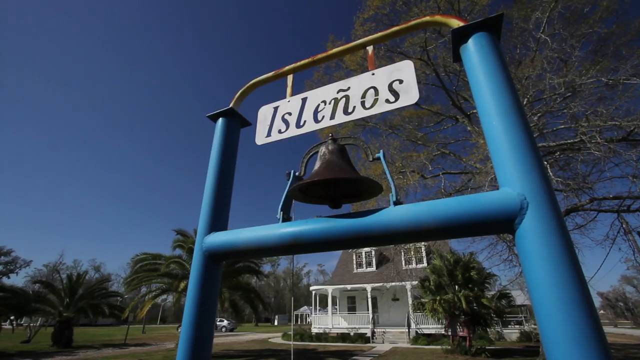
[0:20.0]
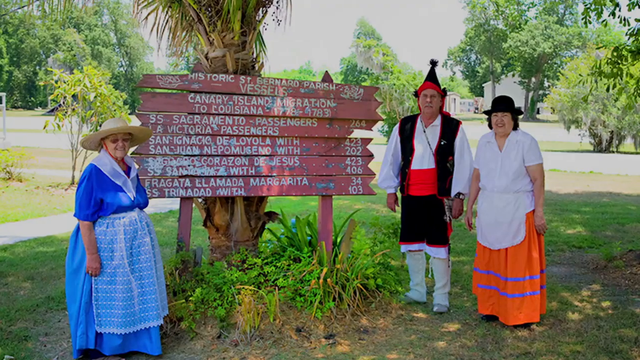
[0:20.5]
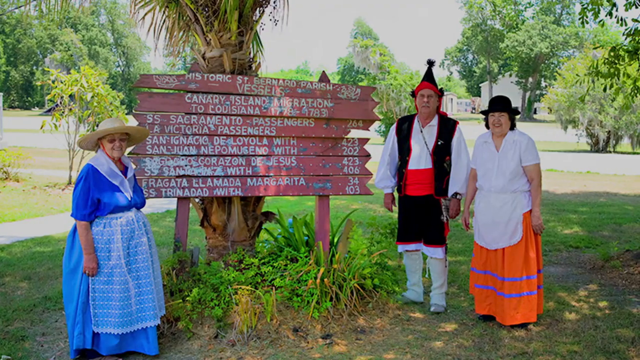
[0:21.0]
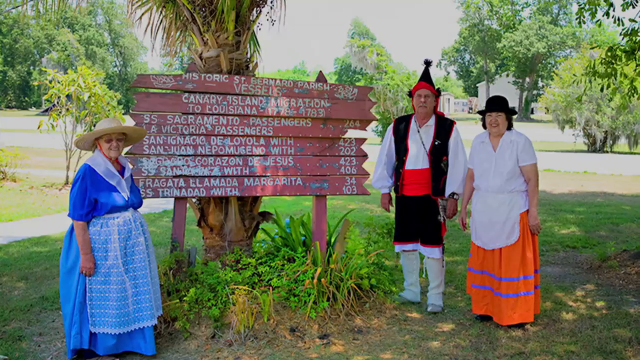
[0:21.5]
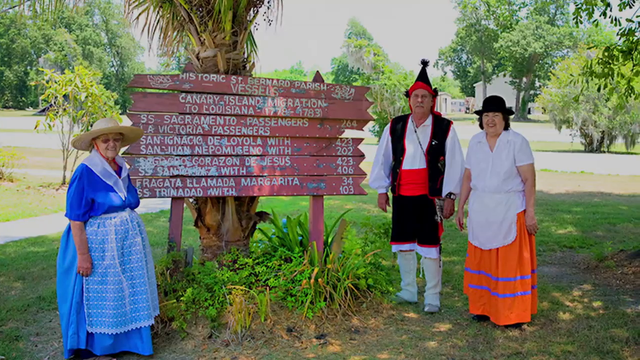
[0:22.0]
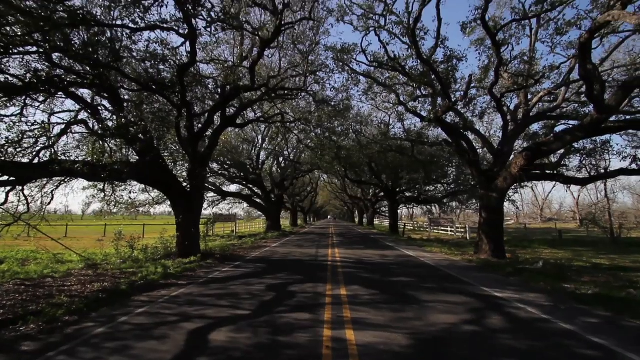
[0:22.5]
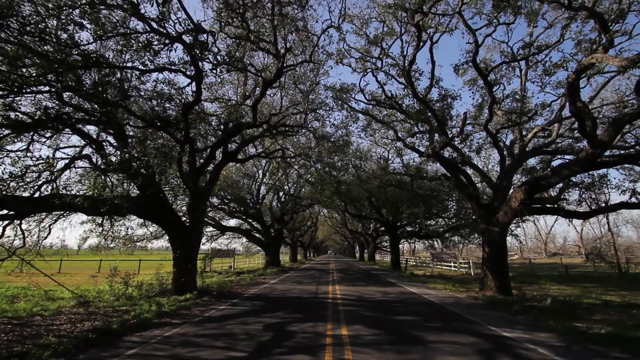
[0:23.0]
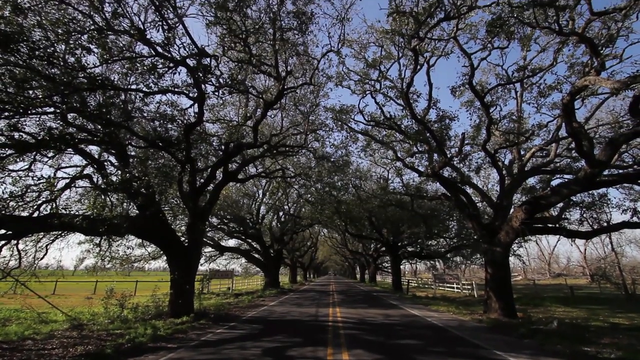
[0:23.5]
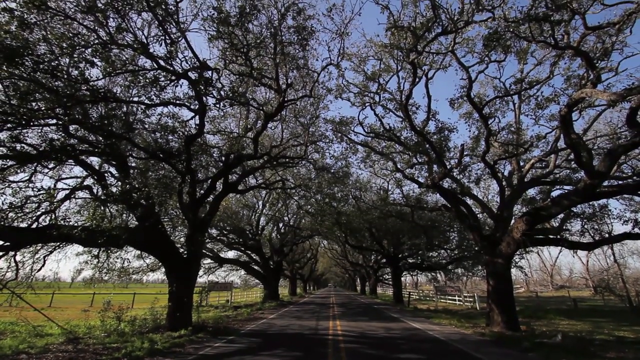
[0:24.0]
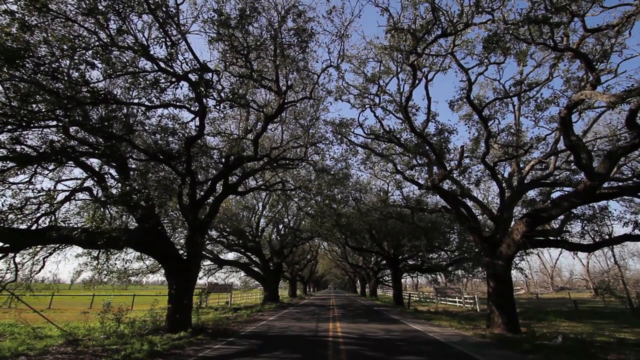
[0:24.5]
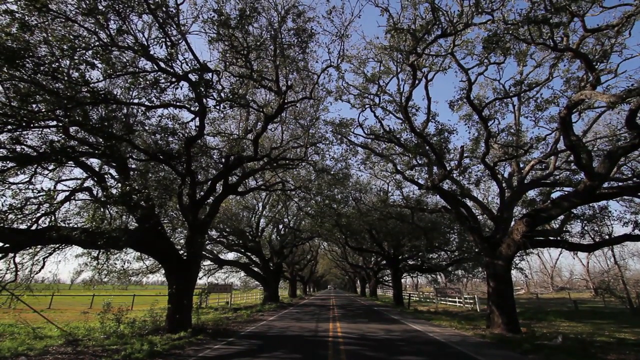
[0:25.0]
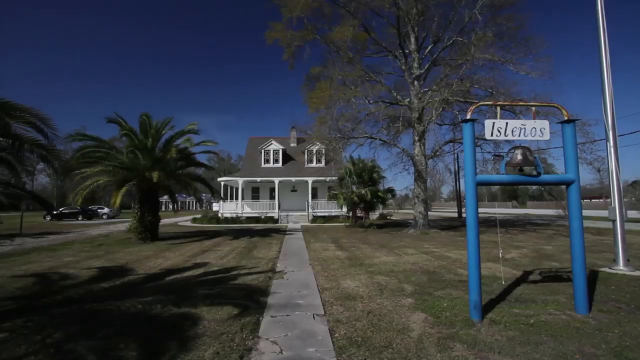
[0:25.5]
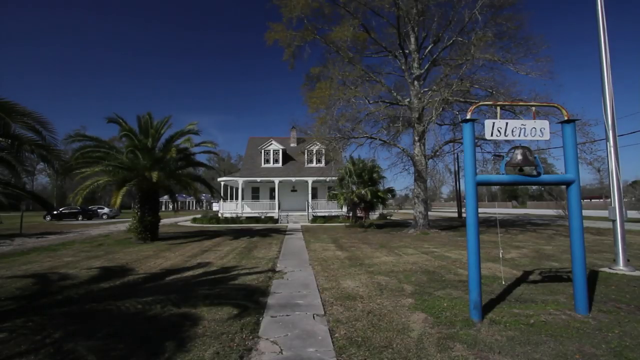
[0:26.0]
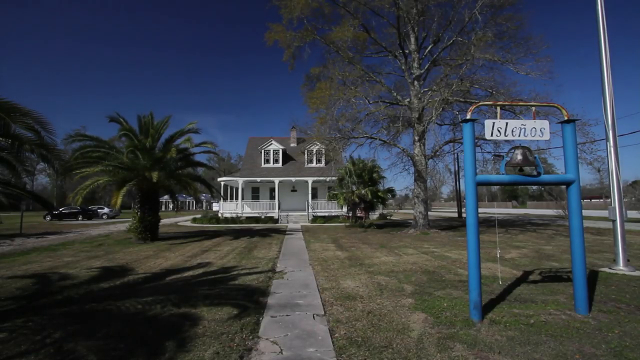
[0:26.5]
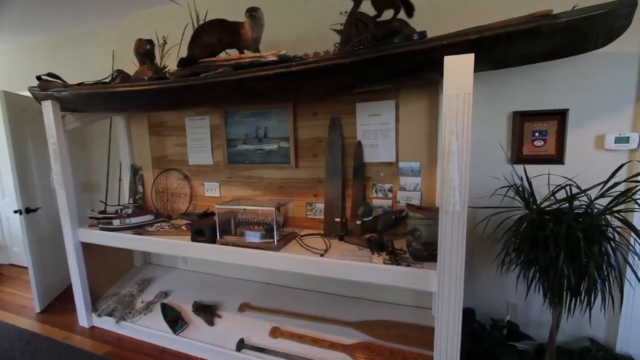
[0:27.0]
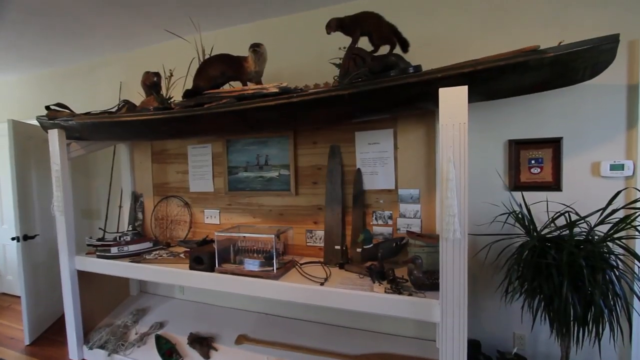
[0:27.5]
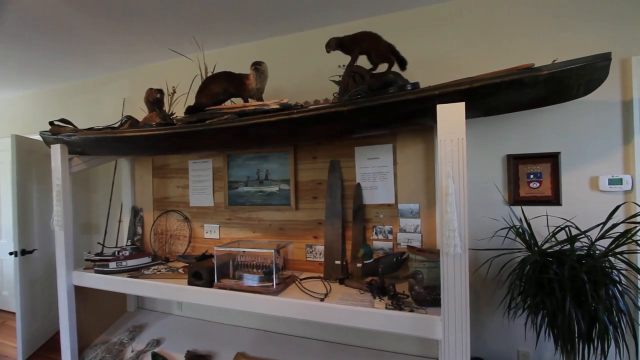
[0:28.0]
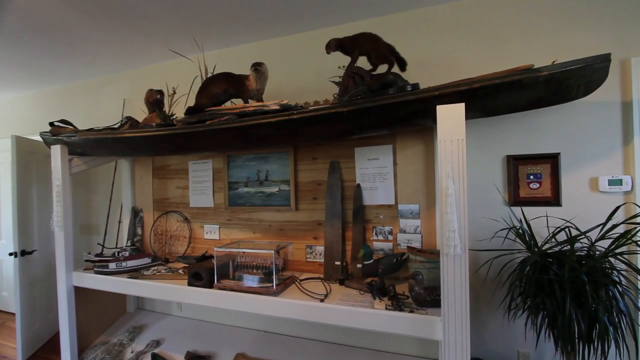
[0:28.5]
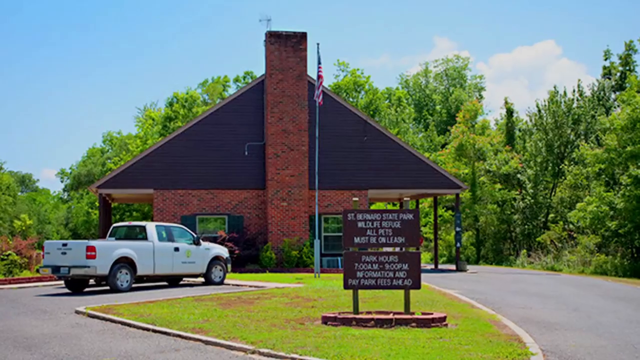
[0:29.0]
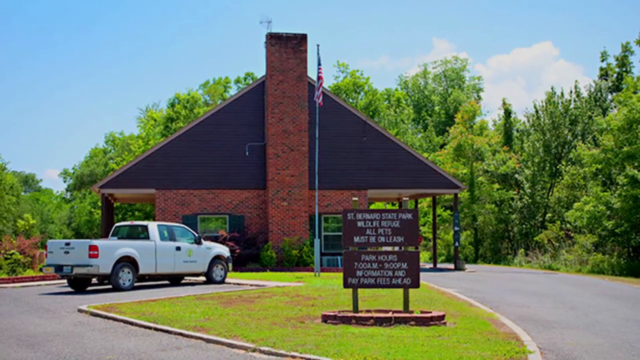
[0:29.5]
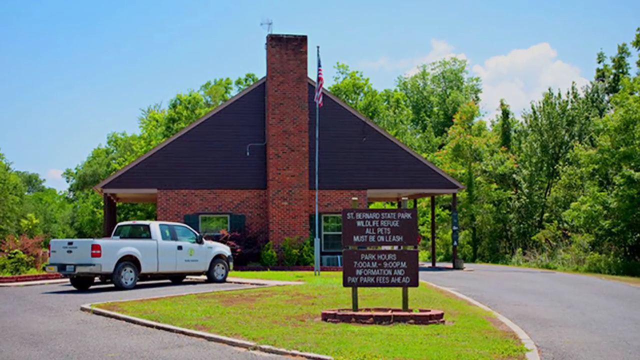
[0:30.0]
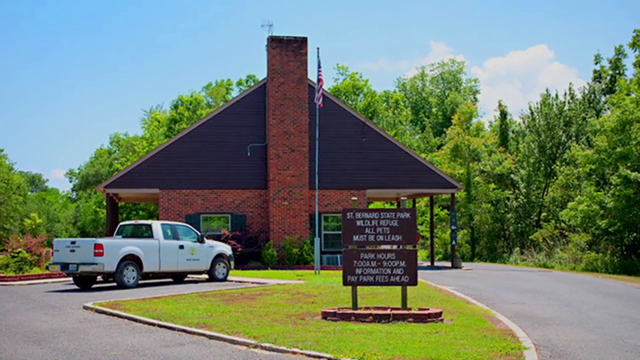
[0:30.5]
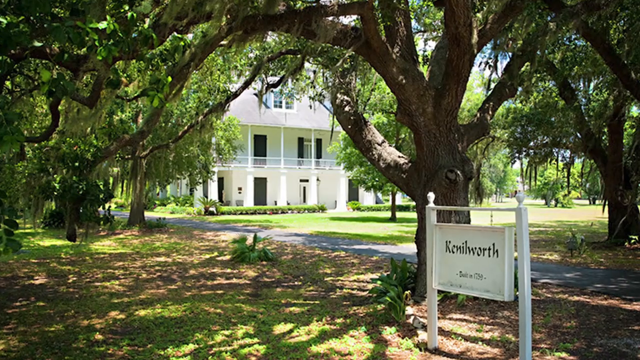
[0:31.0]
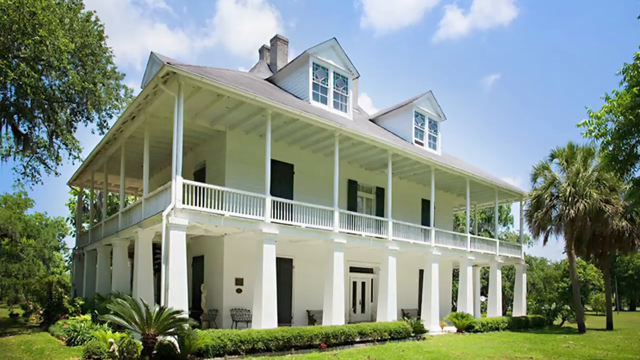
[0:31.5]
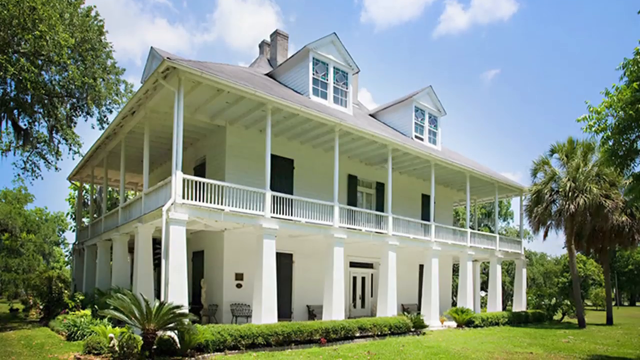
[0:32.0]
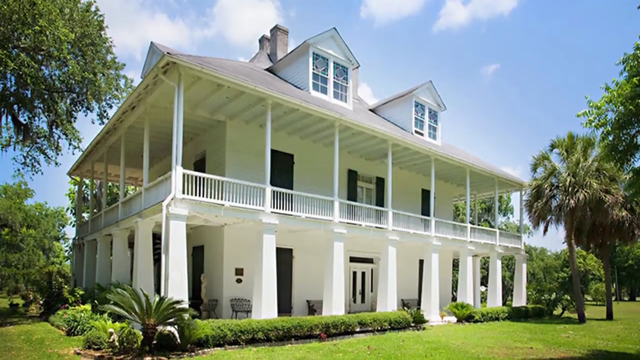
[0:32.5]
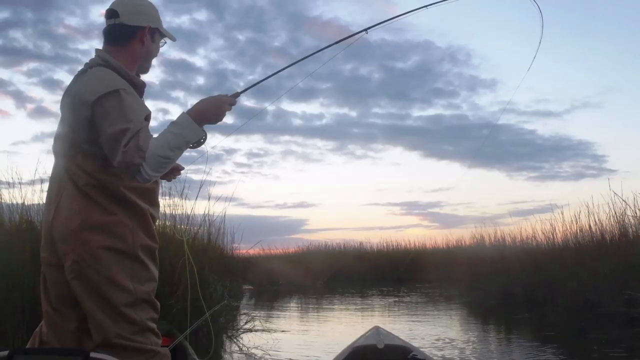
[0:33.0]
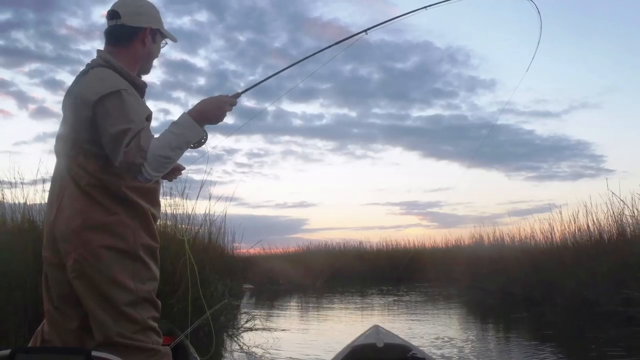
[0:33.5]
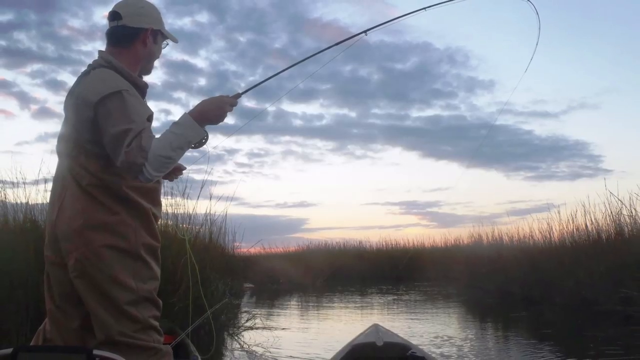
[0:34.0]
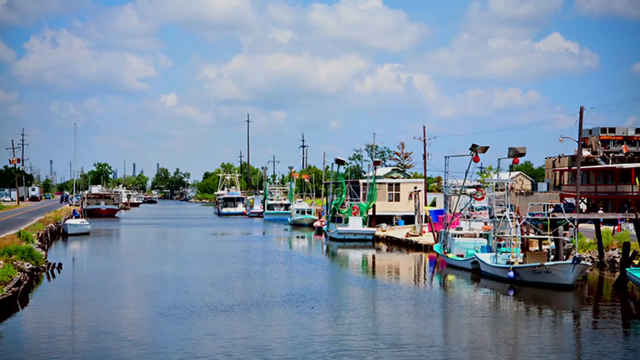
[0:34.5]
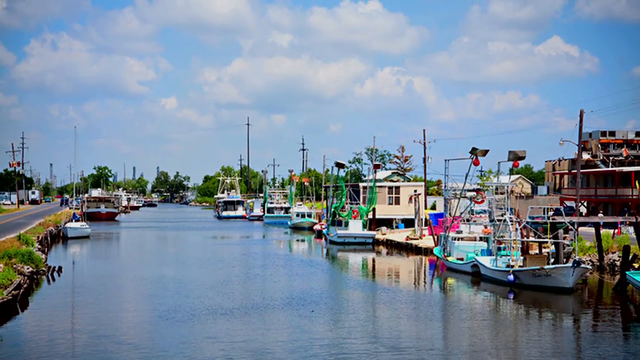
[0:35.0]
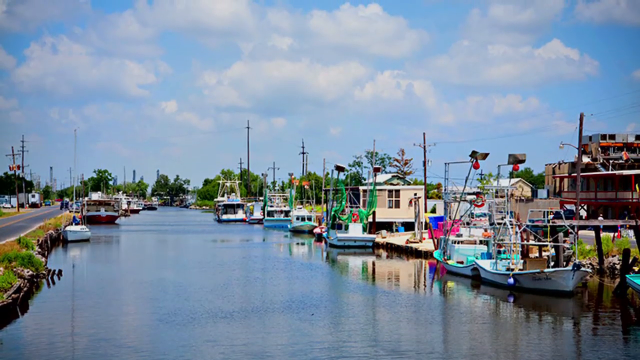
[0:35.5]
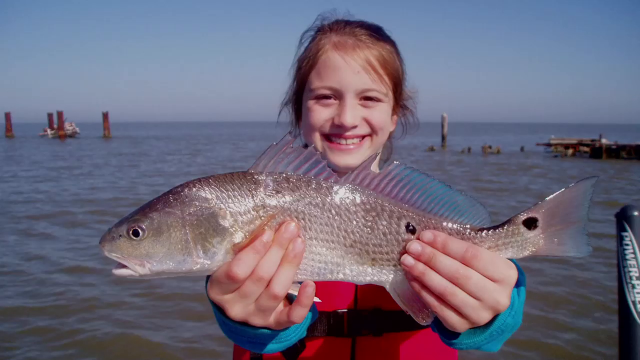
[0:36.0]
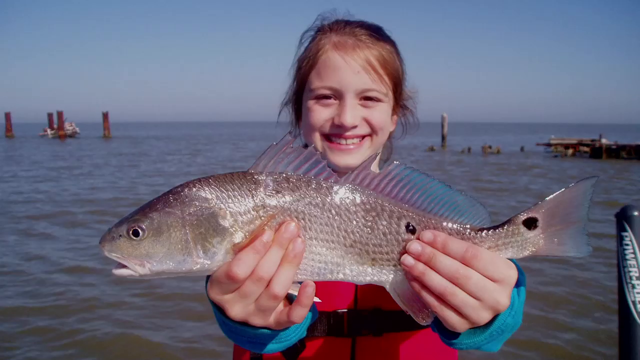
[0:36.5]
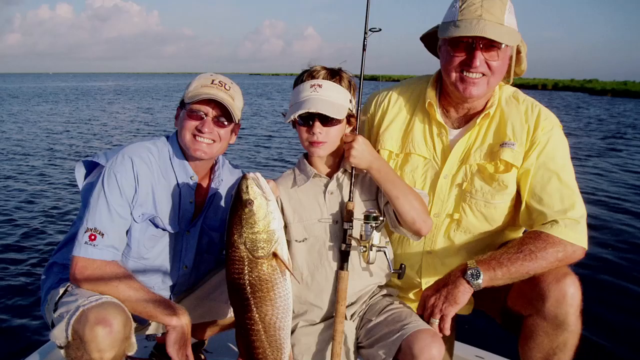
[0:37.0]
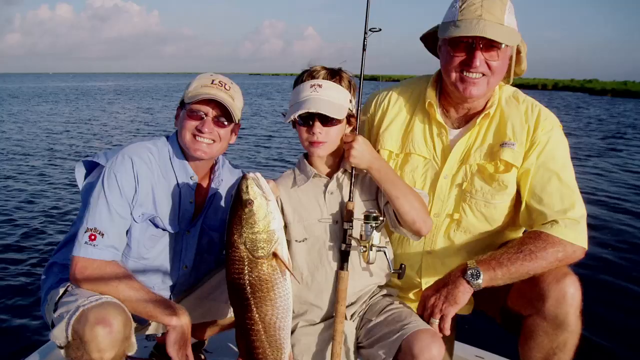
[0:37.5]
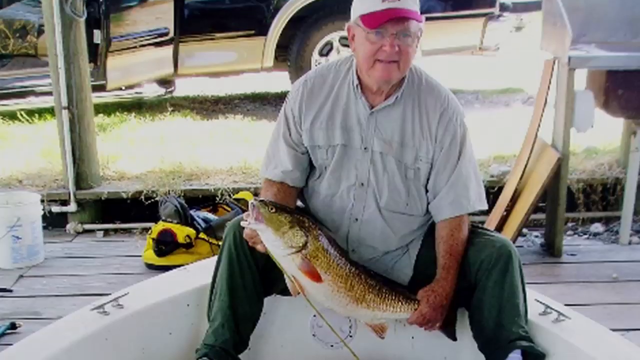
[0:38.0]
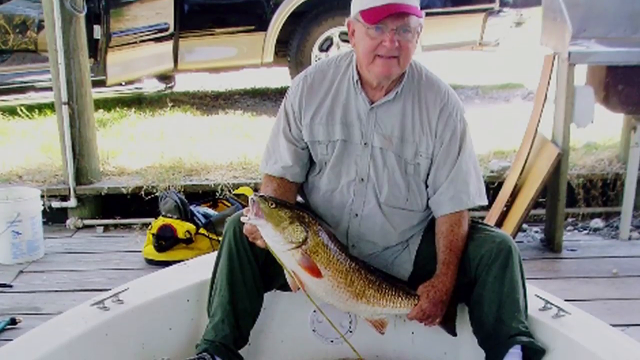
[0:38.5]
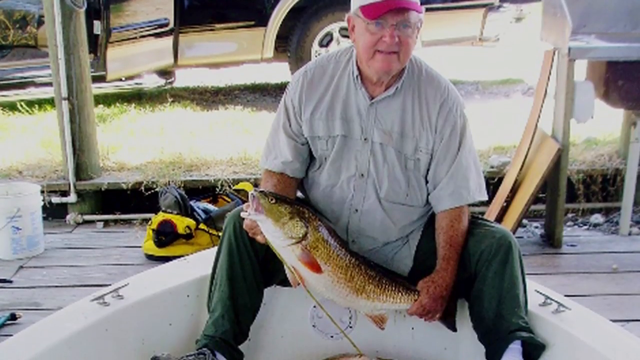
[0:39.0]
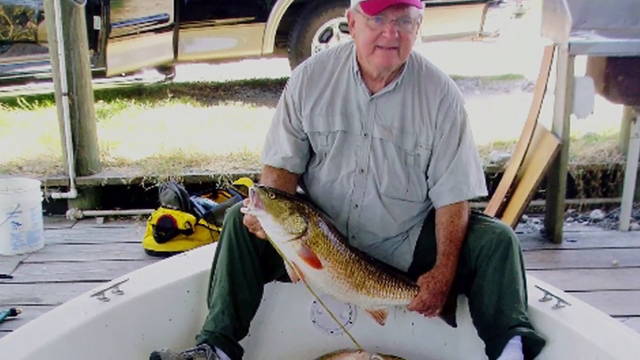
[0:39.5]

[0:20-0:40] A bell appears with a sign above it bearing text. Several people dressed in traditional clothing are shown: an old woman on the left wears something like a straw sunhat, a man on the right looks like he is dressed as a jester, wearing a black hat with red stripes, and to his right a woman wears a black, somewhat oval-shaped hat and an orange blouse. More images and video follow of historical houses, including a really big house, as well as more pictures of people fishing and showing the fish they caught. A little girl holds up a fish with blue, purple and gray scales.